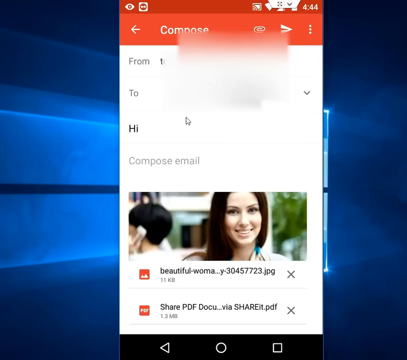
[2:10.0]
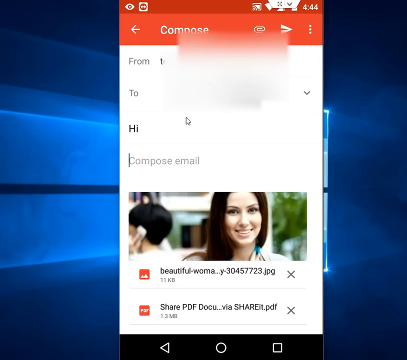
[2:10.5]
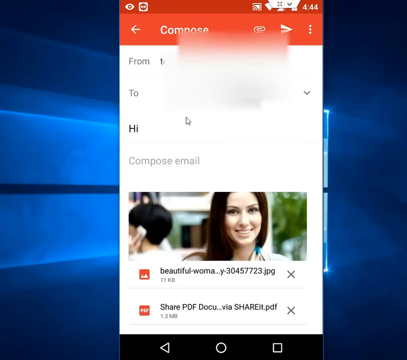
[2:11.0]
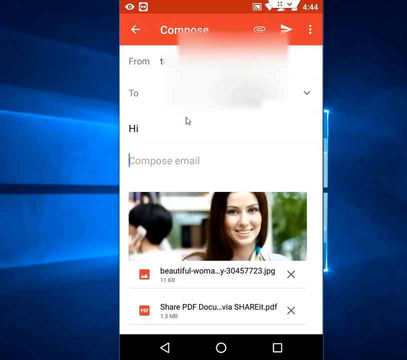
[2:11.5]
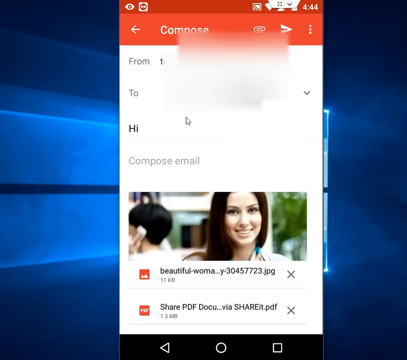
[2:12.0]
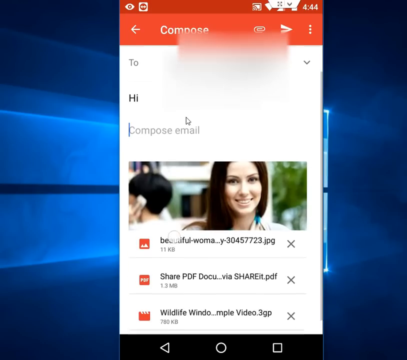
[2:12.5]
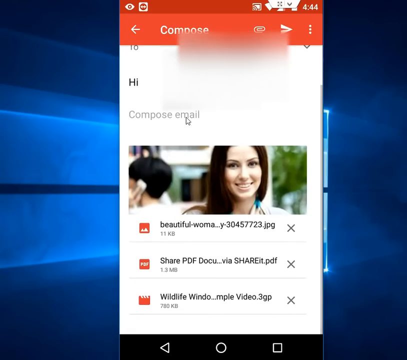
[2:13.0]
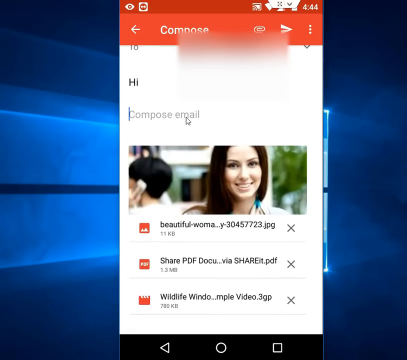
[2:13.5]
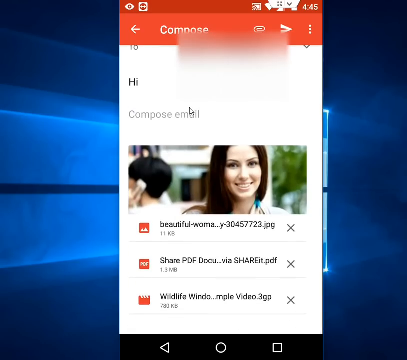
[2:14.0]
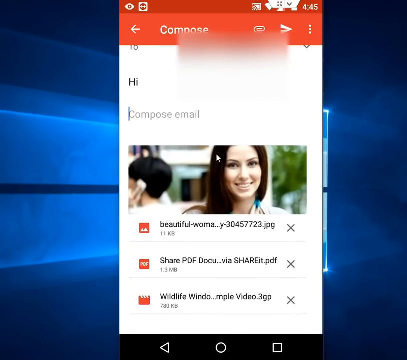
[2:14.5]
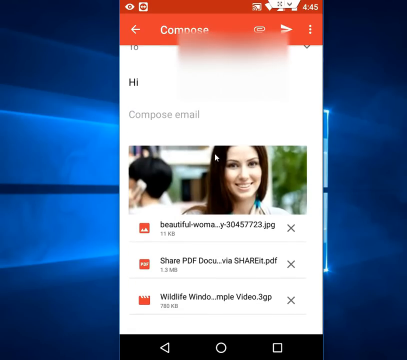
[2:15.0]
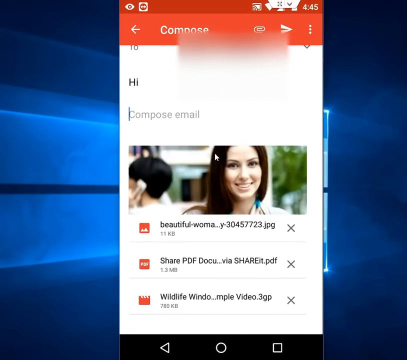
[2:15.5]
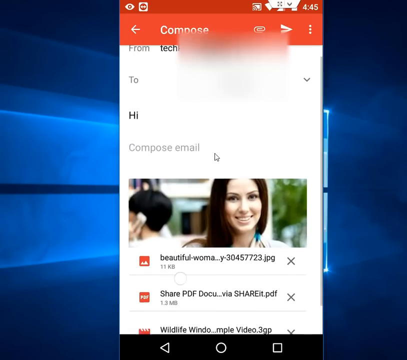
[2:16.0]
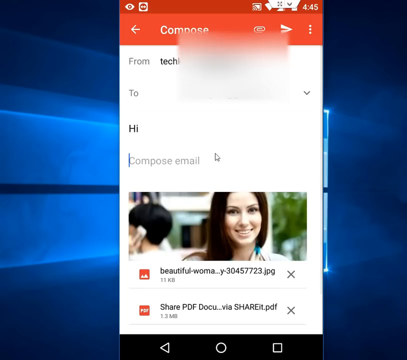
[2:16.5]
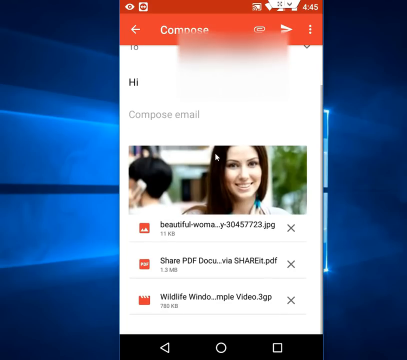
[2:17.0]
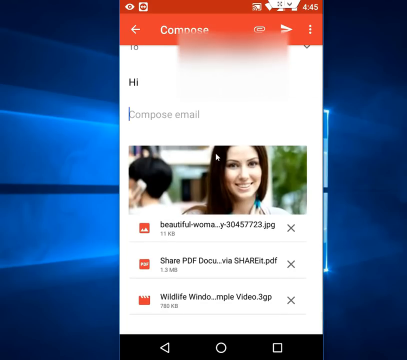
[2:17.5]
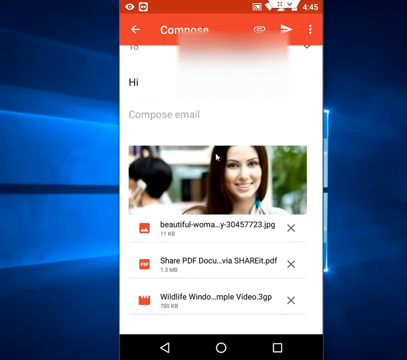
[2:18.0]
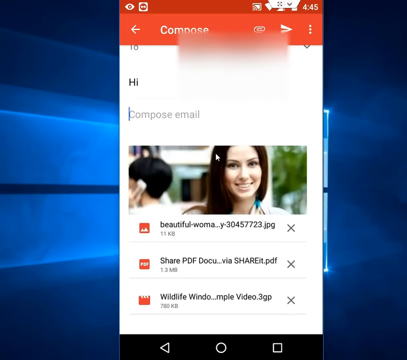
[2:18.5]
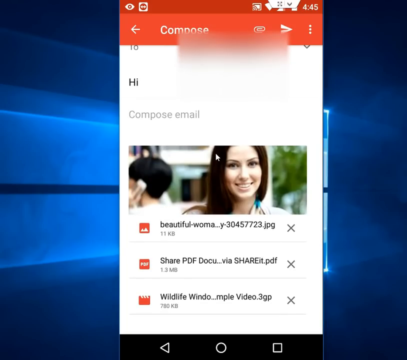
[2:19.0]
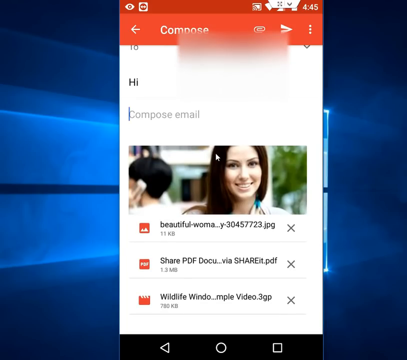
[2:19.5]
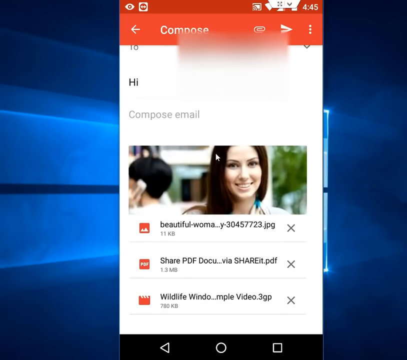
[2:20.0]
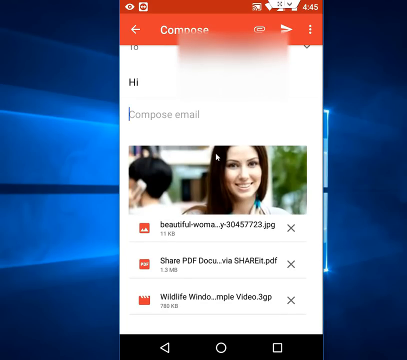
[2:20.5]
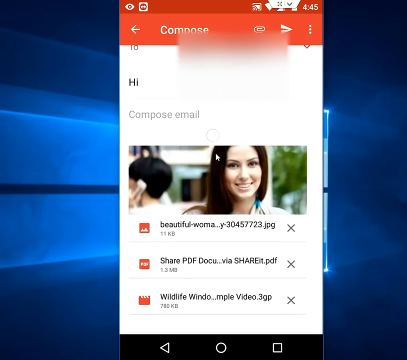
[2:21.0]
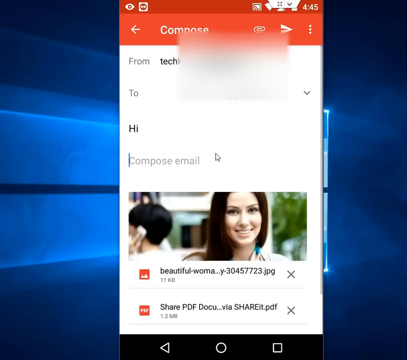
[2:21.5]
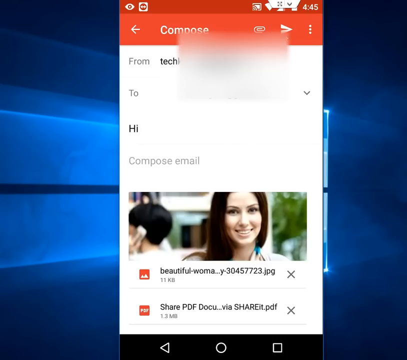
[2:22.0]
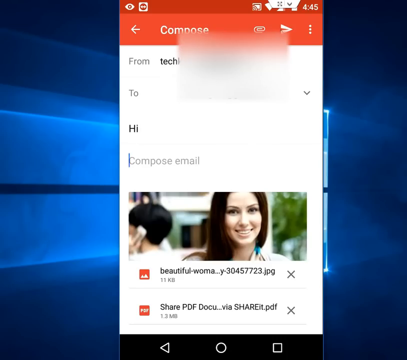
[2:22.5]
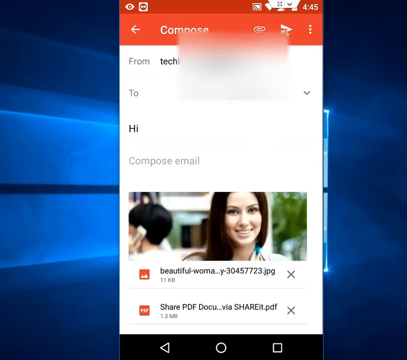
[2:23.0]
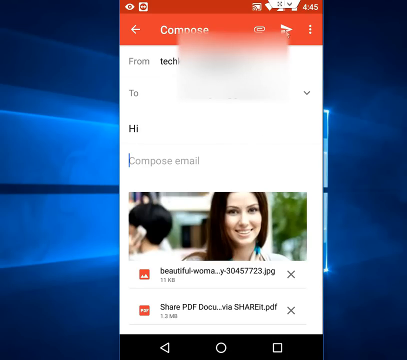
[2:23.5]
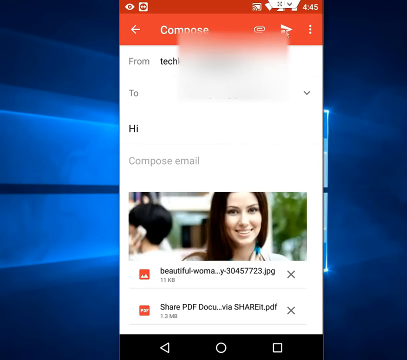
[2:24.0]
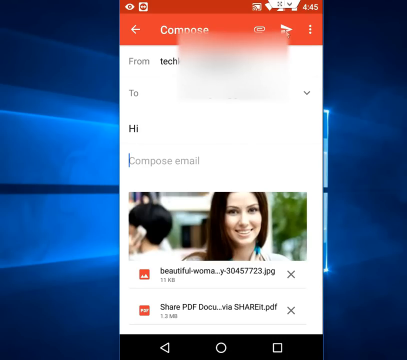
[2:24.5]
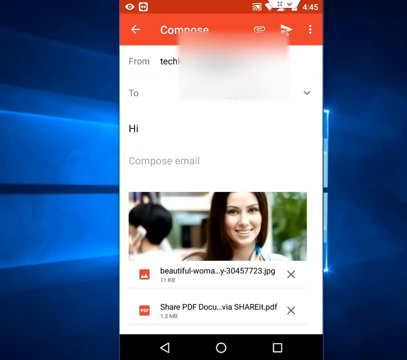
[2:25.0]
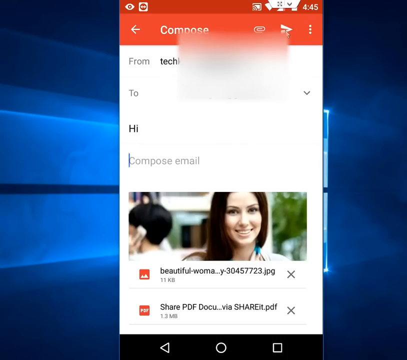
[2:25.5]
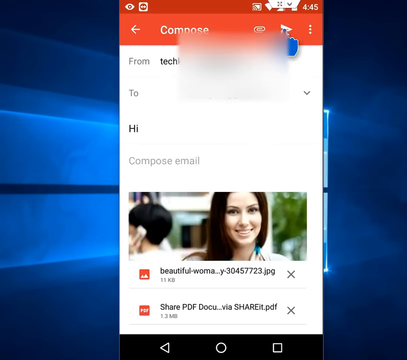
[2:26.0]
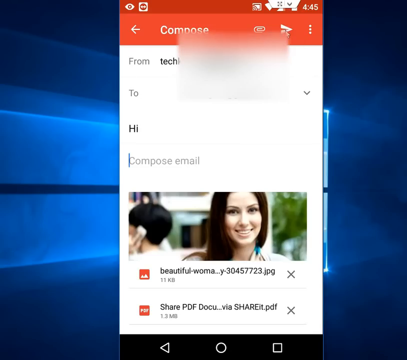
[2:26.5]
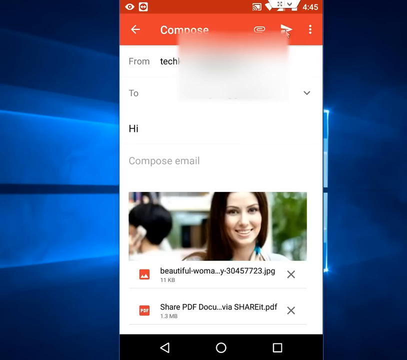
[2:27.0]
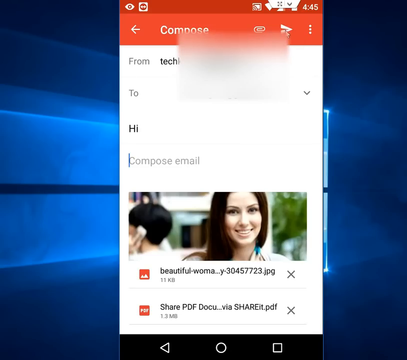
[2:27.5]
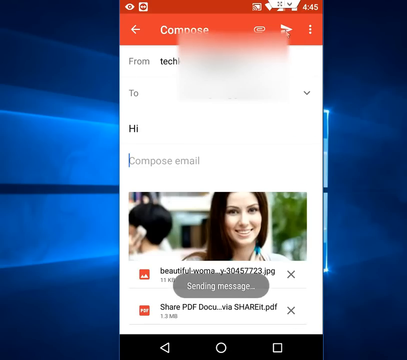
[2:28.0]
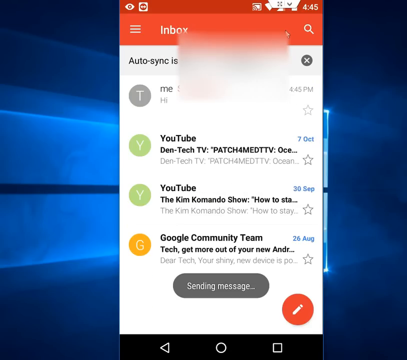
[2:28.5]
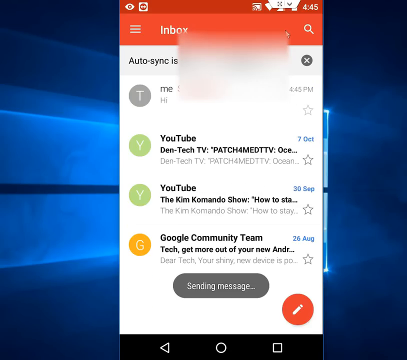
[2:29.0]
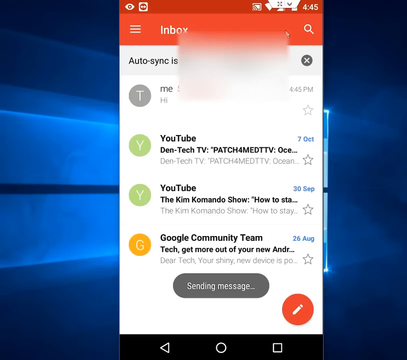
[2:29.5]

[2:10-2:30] An email is being composed on a phone, with the words "compose email" visible. A picture shows a smiling woman with long dark hair and a blue and white scarf or shirt around to her back, with trees on the right. A man with short dark hair looks toward the left of the screen, holding a white phone up to his left ear. At the top is the word "compose" with an arrow pointing left, a paper clip, and a triangle to the right of that, all on a rust-colored background, with three dots on that side. Below, the "to" section is blurred out, and the subject line appears to read "hi". Then comes "compose email", and below it the picture of the woman and the man. Underneath is a picture icon on the left with "Beautiful y", a JPEG, with a gray X beside it. Below that is a PDF icon with "share pdf .pdf" and another gray X to its right. Then comes "wildlife window video.3gp", with what looks like a clipboard icon showing a movie on its left and a gray X on its right.